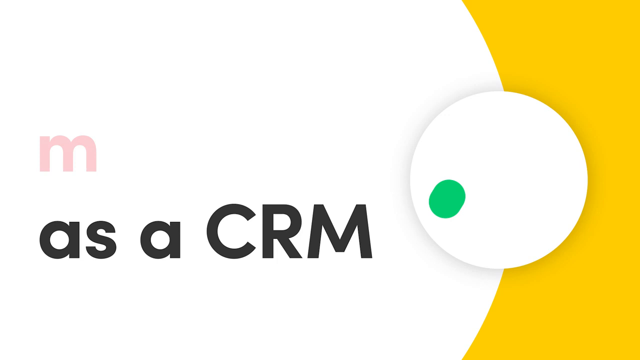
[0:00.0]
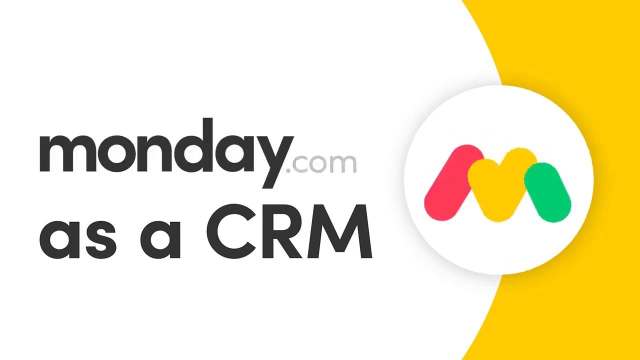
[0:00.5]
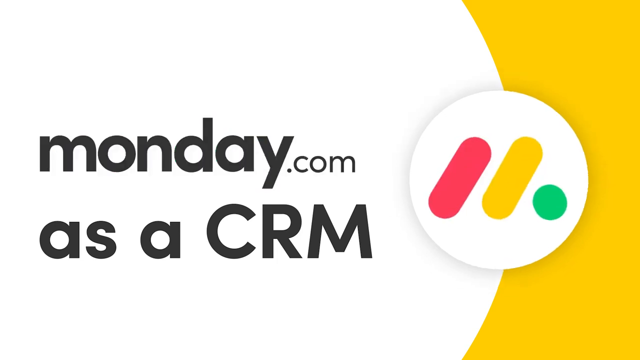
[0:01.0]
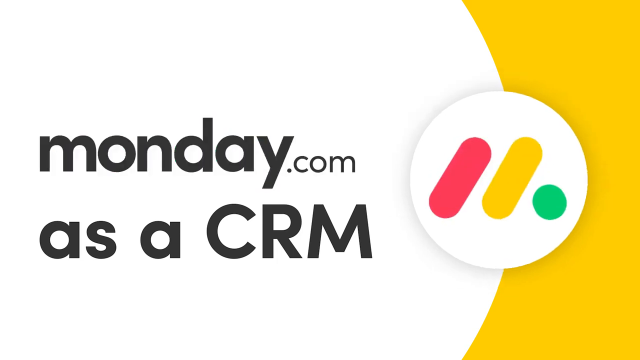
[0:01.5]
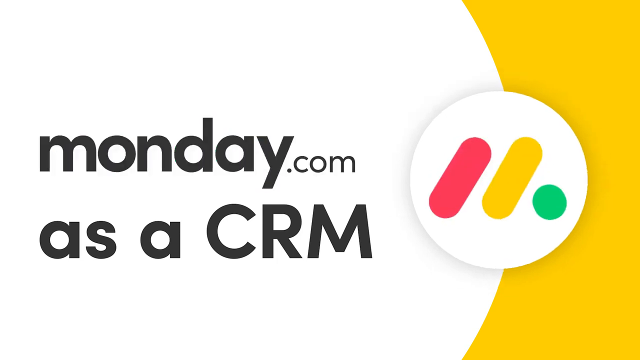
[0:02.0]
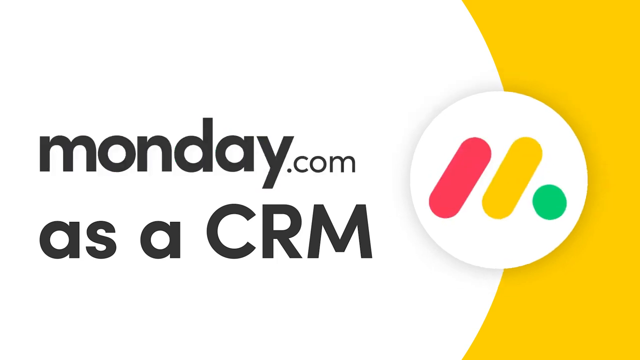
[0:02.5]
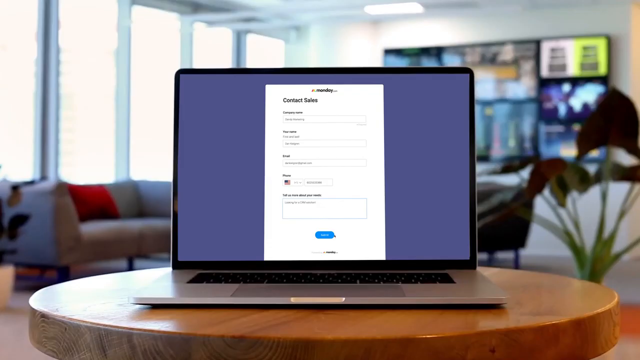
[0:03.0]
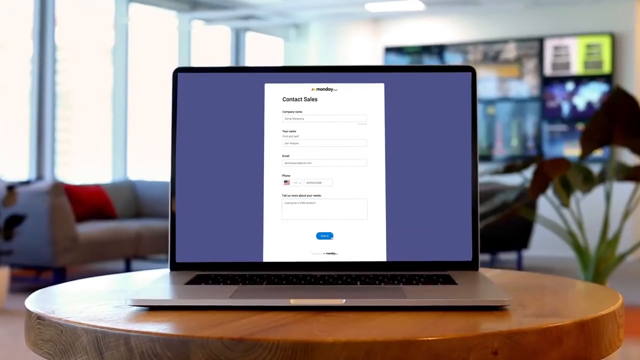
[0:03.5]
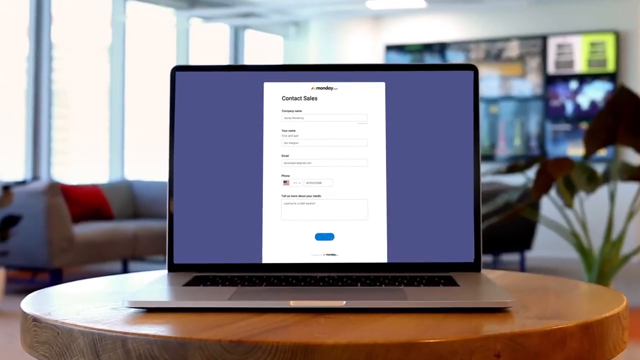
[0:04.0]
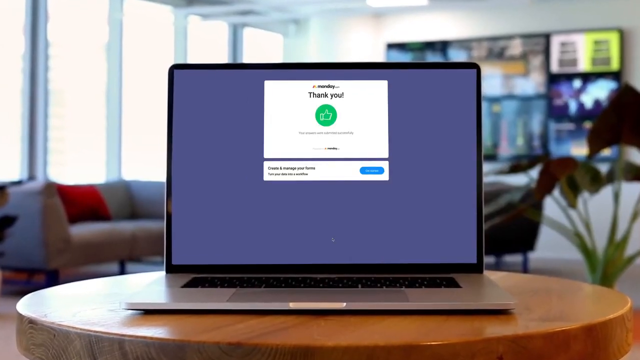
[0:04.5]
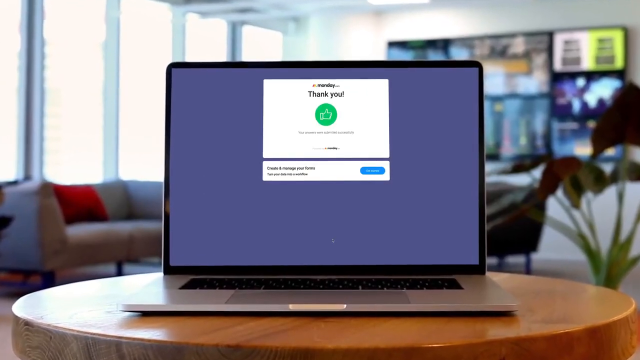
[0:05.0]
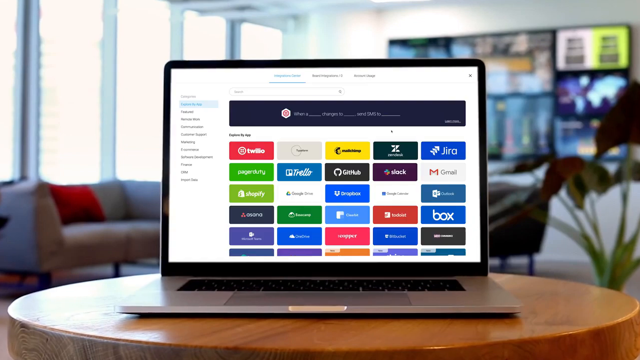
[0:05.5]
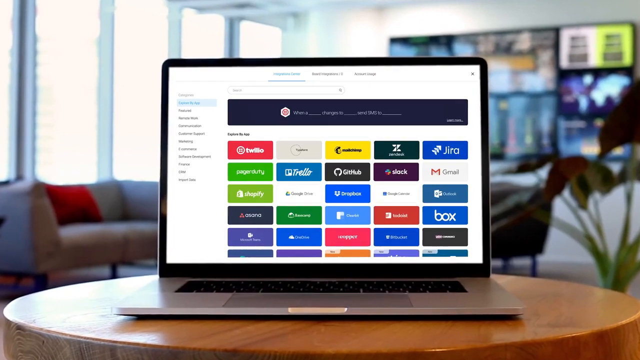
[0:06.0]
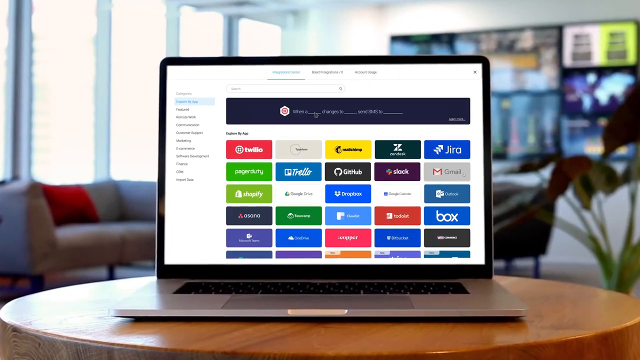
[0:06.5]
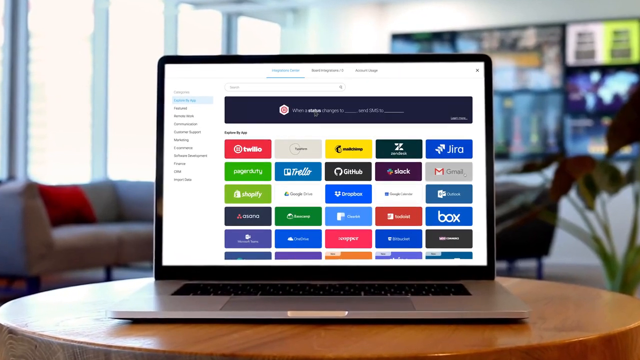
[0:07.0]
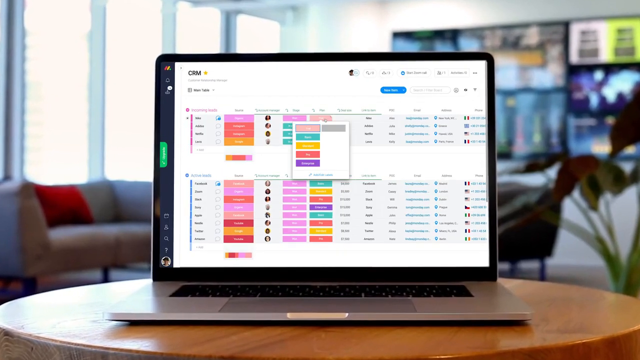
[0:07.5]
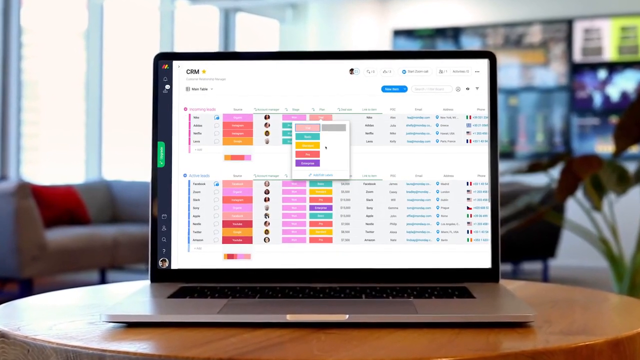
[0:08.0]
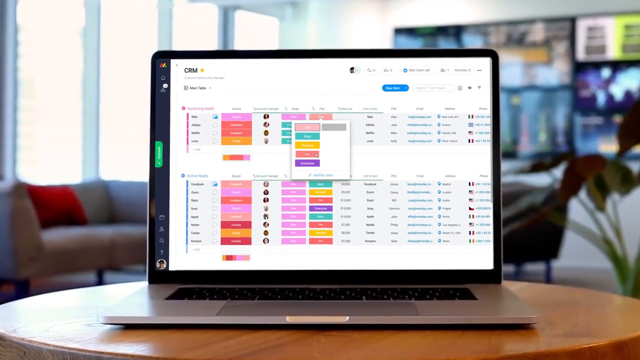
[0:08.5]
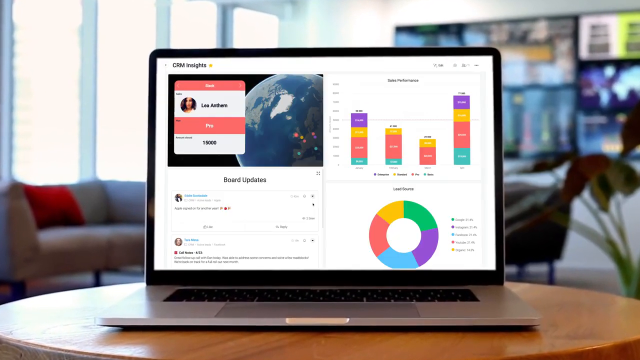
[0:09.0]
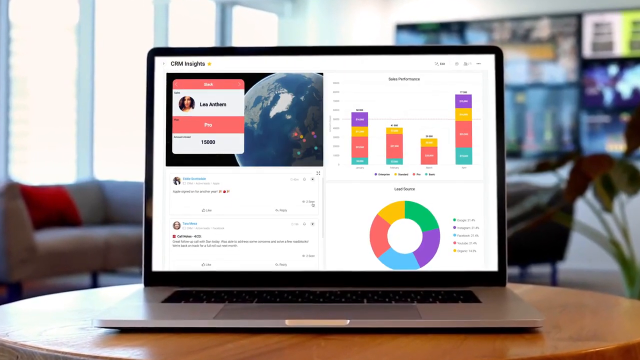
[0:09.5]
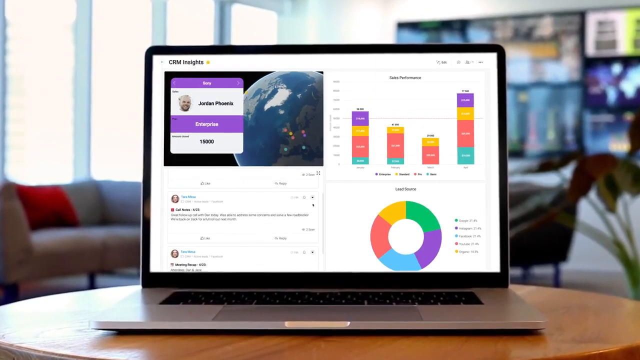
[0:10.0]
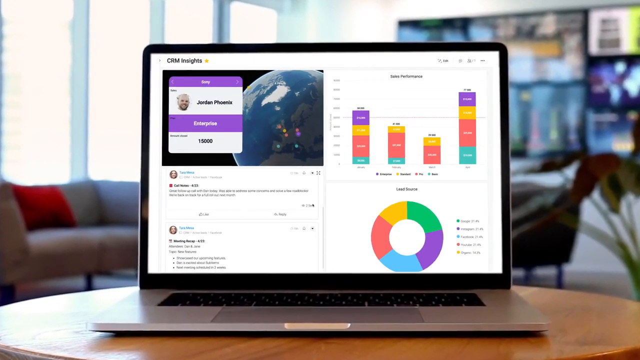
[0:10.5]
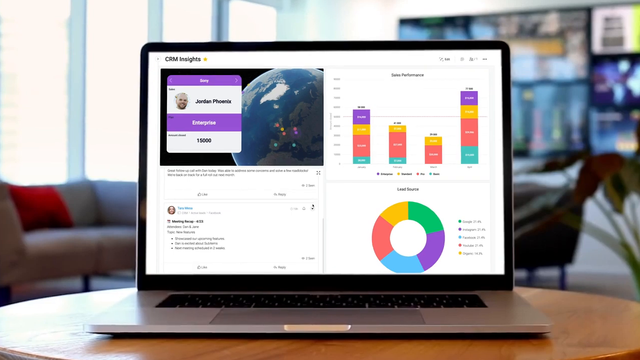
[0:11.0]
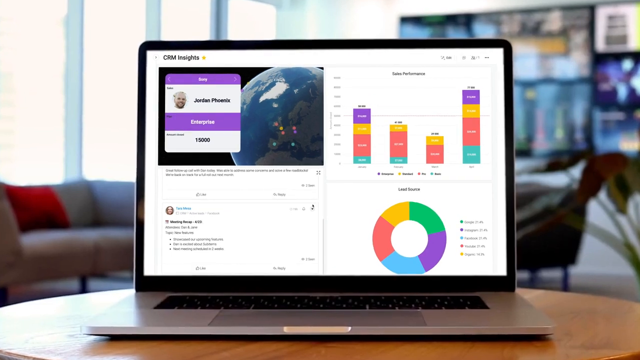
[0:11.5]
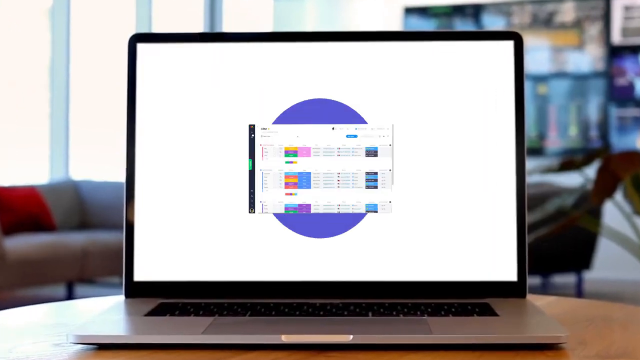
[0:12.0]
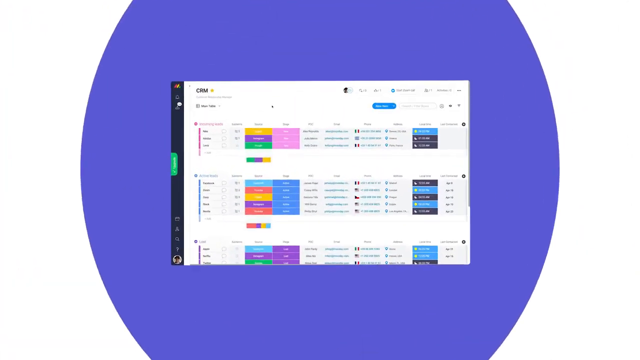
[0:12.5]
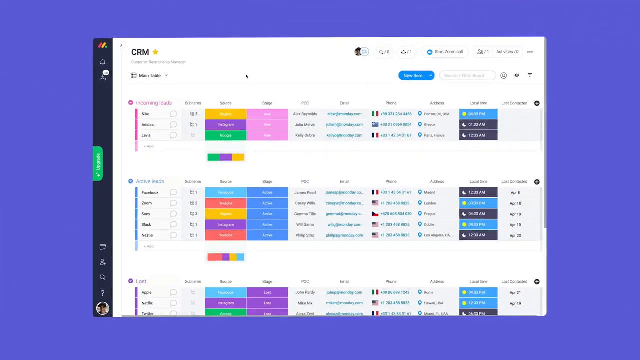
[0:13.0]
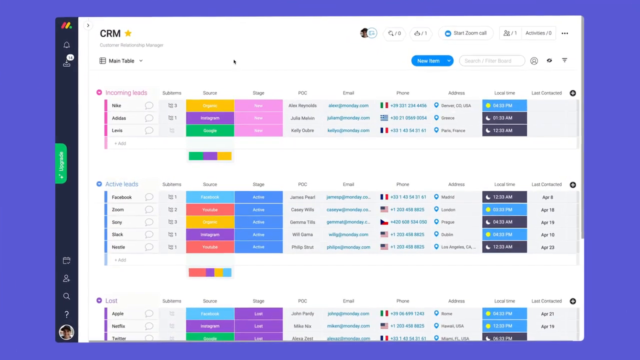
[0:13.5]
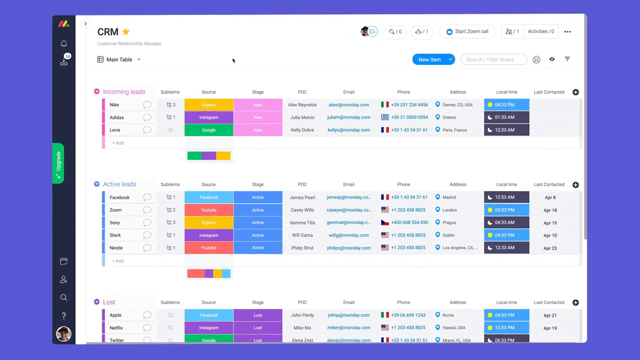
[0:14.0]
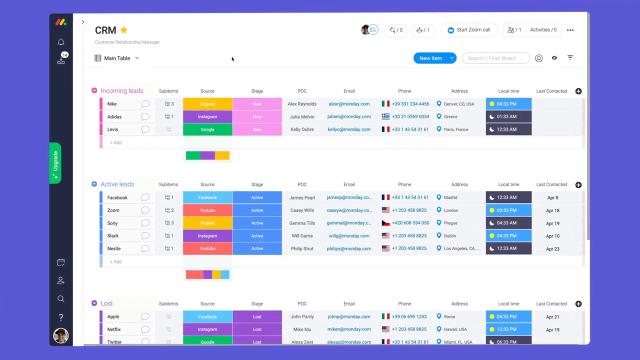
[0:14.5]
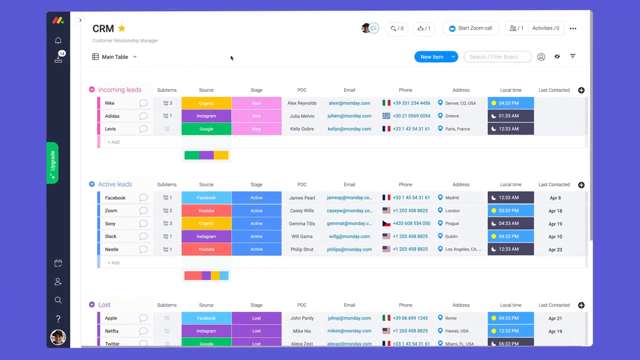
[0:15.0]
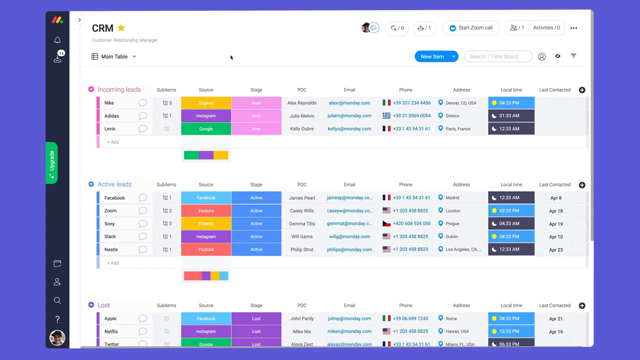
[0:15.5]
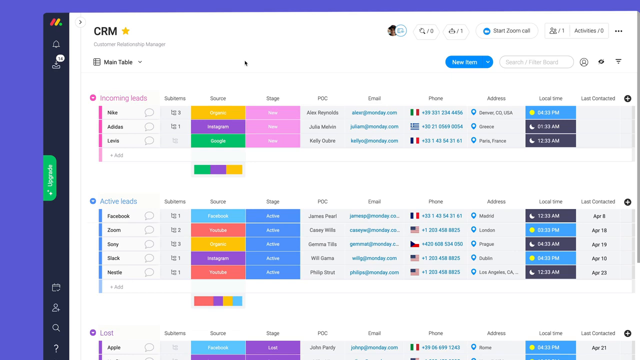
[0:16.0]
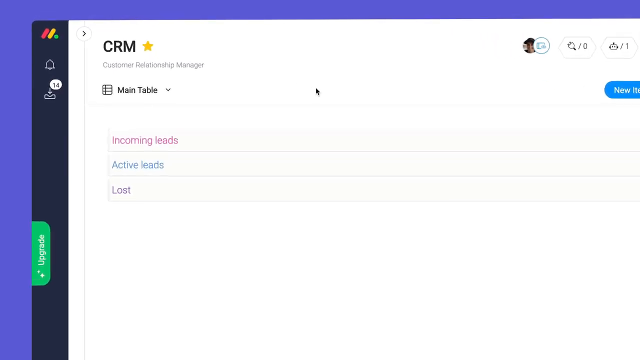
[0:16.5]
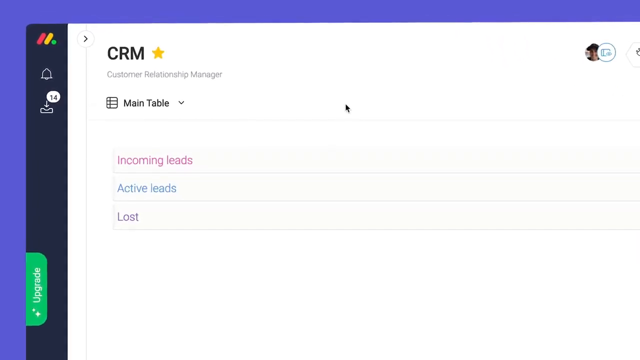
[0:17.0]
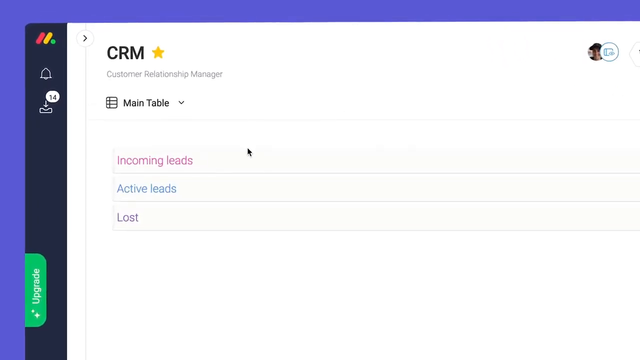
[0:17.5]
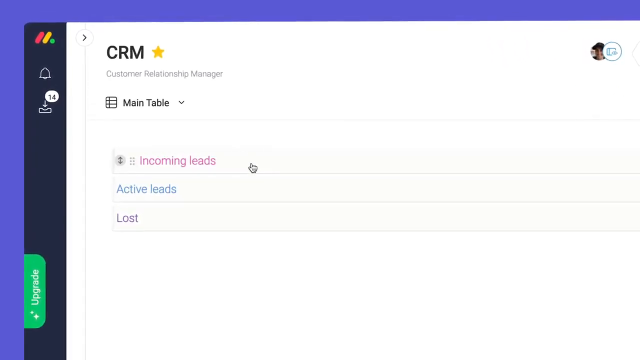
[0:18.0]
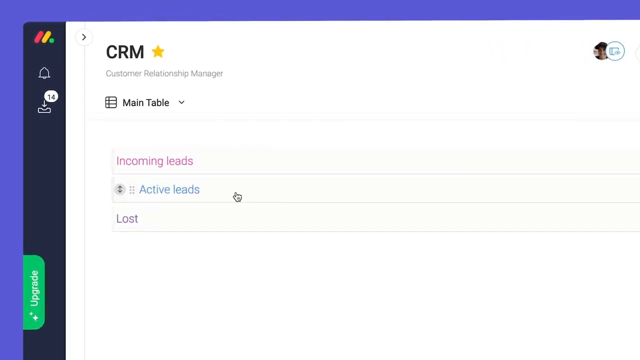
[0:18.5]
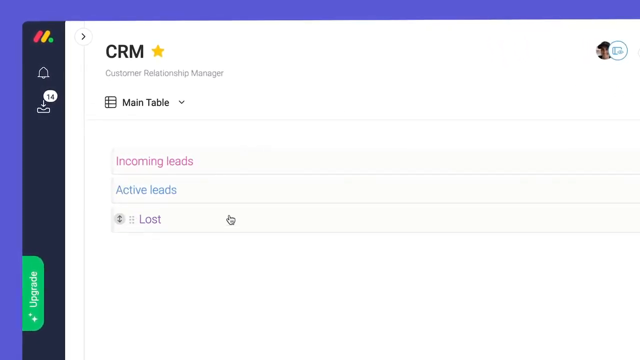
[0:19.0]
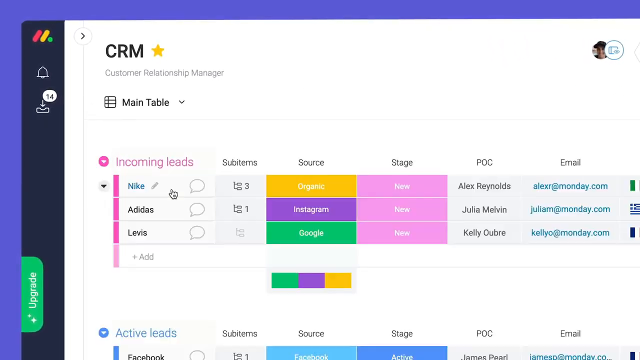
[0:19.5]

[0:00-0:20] The video opens with on-screen text reading "Monday.com as a CRM" alongside a red, yellow, and green logo. A slow zoom moves in on a tabletop holding a laptop whose screen changes while it is watched, with the cursor visible on it. In the background there is a large object on the wall that looks like it could be a TV, and chairs are visible in the background behind the computer. The view then zooms in onto a page that says "CRM." Someone uses the cursor to click down through the main table: they click on incoming leads, scroll down to active leads, then scroll down to loss, where they appear to click the loss button.